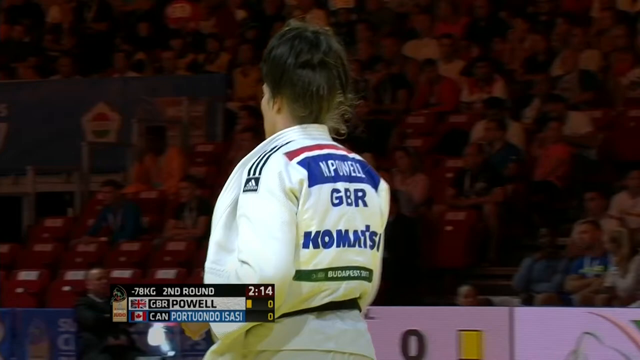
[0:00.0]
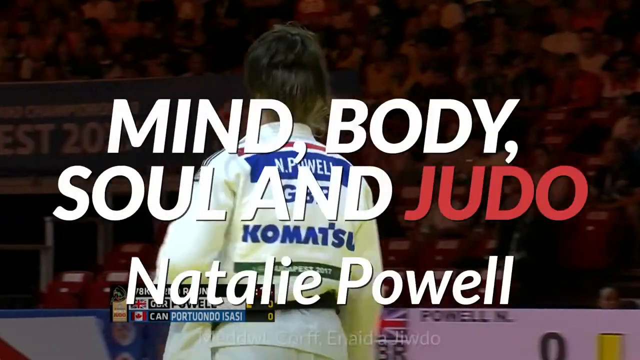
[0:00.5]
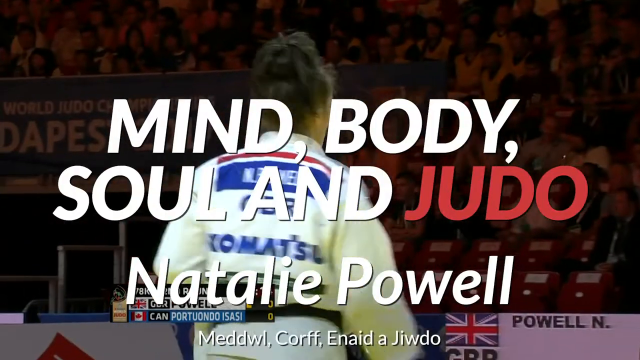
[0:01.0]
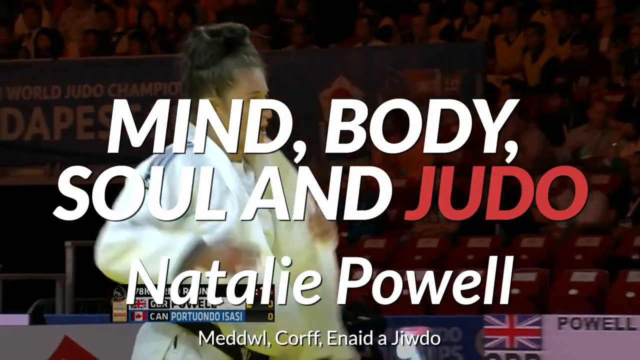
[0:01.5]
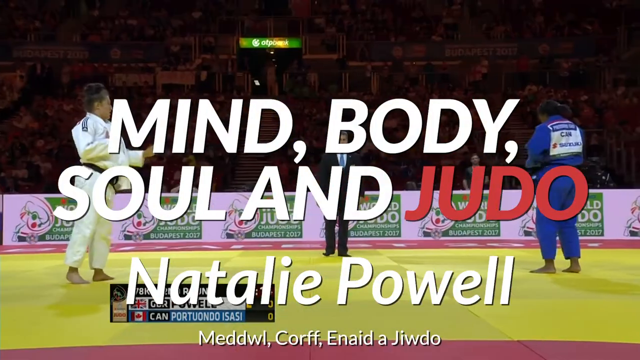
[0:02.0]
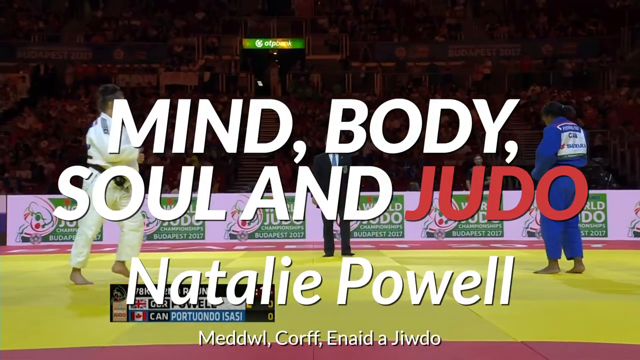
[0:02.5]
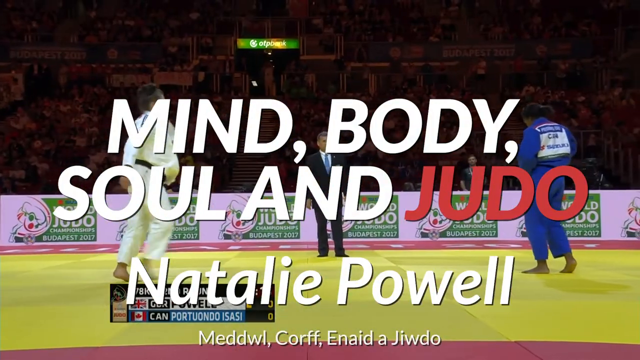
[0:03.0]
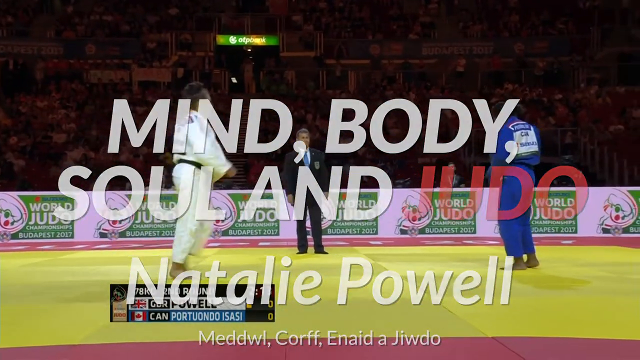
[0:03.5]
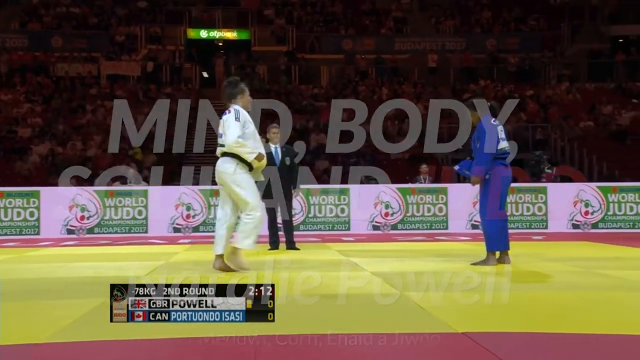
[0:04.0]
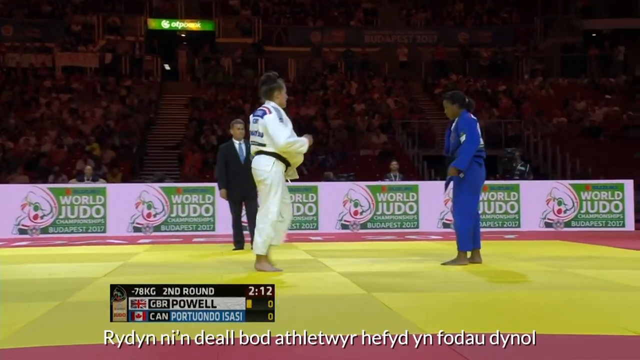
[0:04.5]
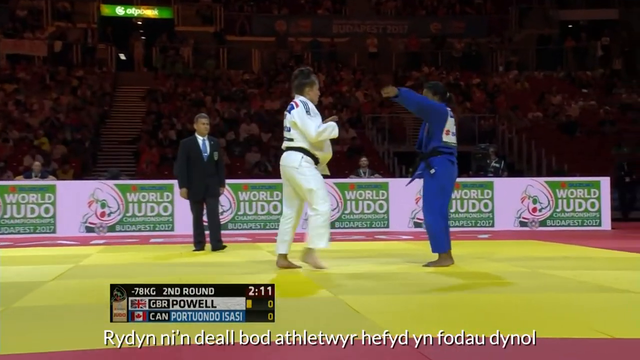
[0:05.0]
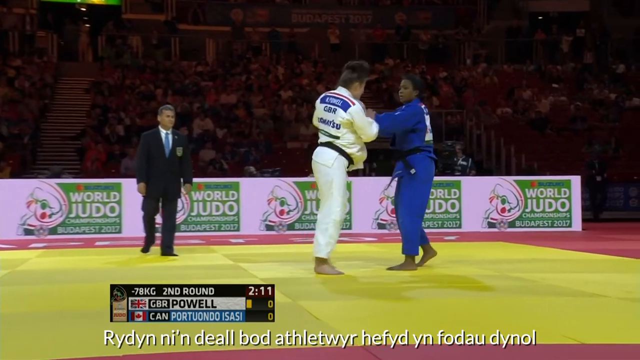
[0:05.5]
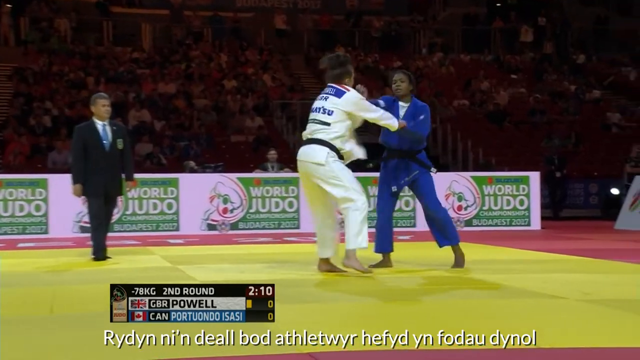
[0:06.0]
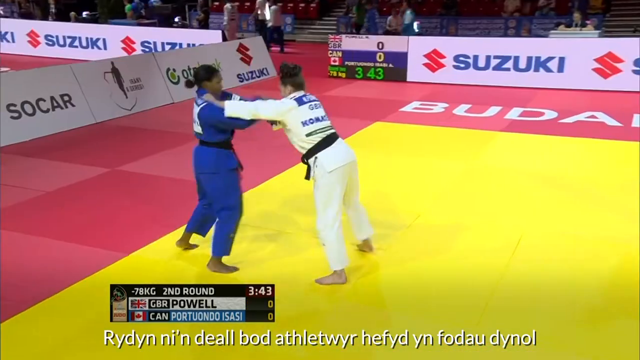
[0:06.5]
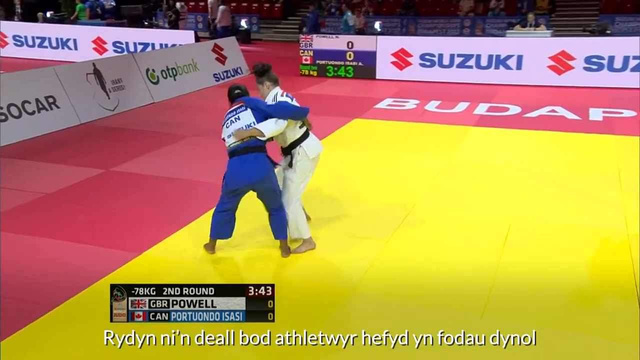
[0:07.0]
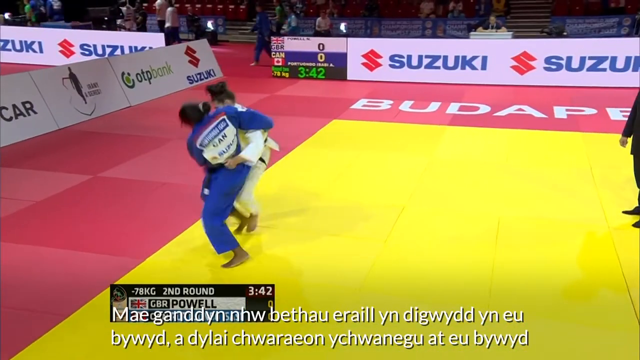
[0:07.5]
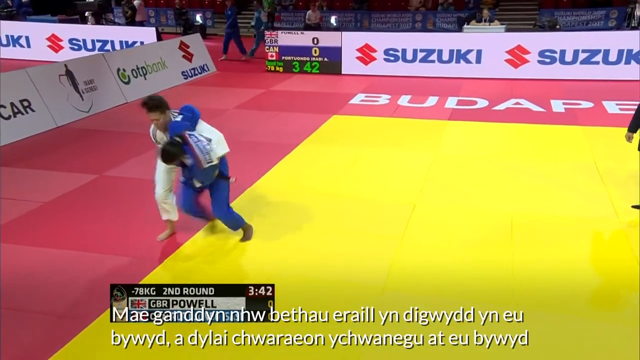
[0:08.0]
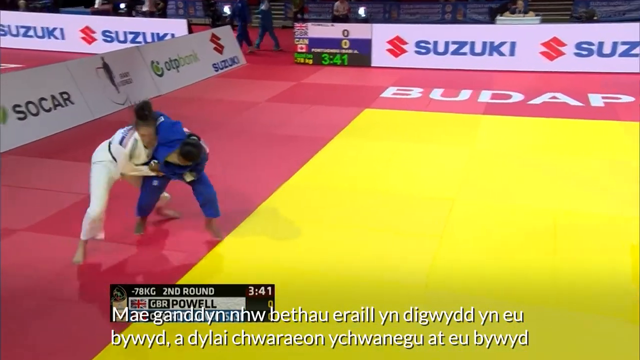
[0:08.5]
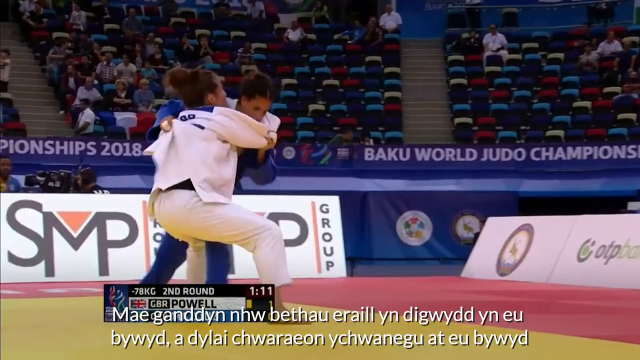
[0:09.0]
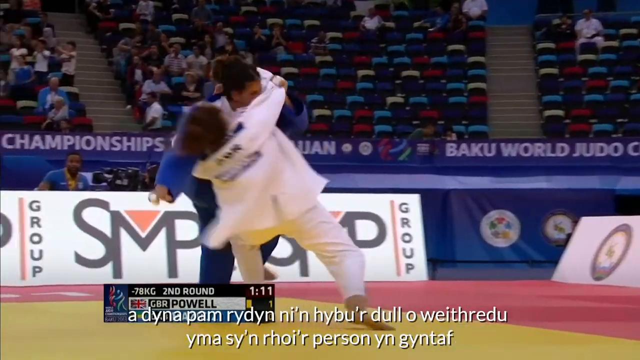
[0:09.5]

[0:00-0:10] Two judo players, one from Great Britain and the other from Canada, compete against each other in front of an audience, each trying to knock the opponent to the ground first to win the match. The background is very dark, so the people in the audience cannot really be seen.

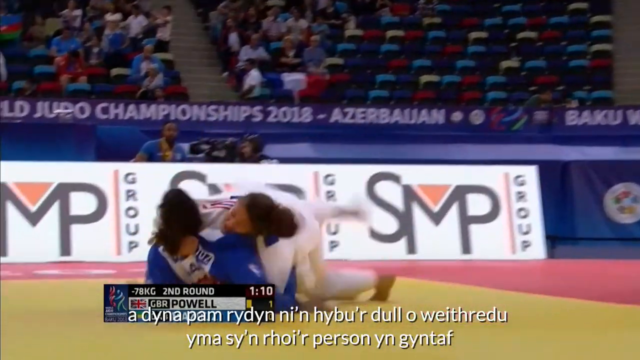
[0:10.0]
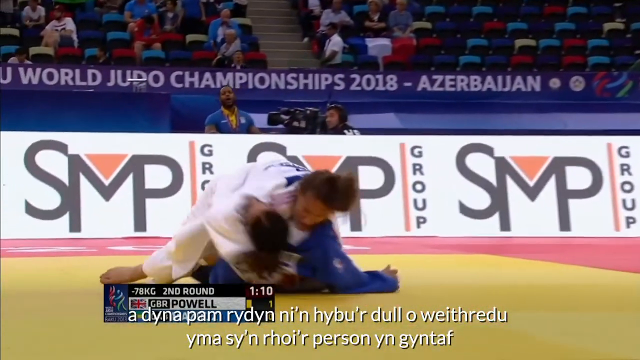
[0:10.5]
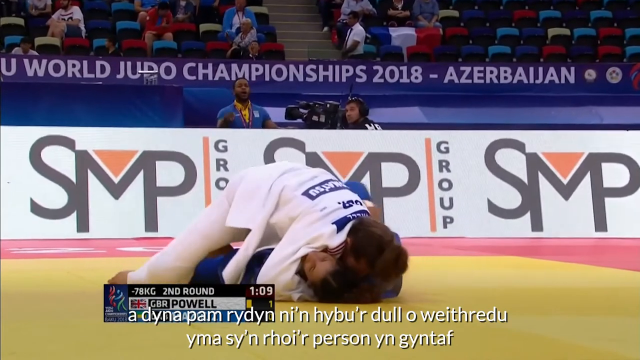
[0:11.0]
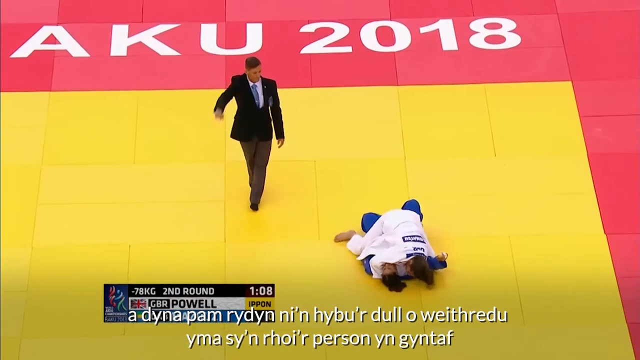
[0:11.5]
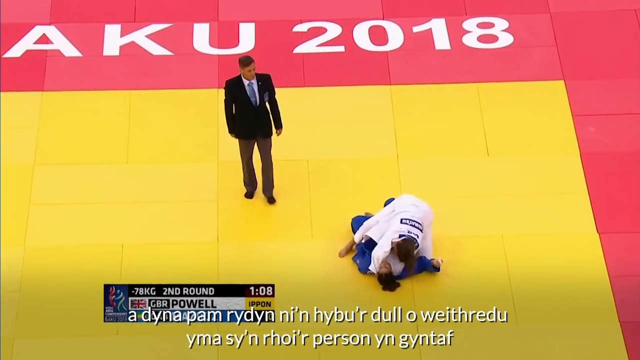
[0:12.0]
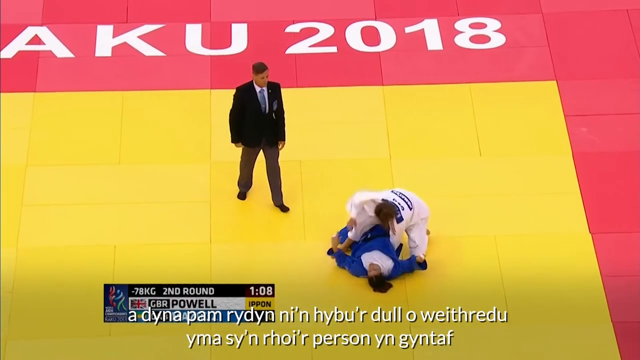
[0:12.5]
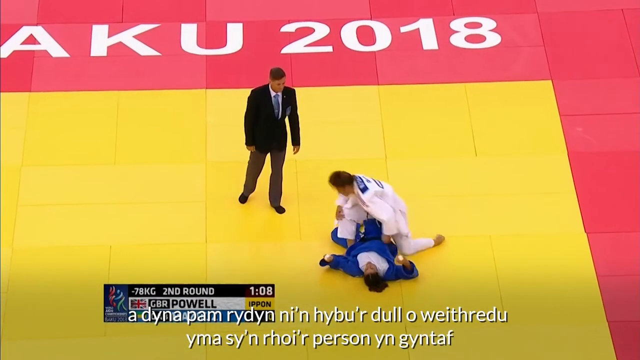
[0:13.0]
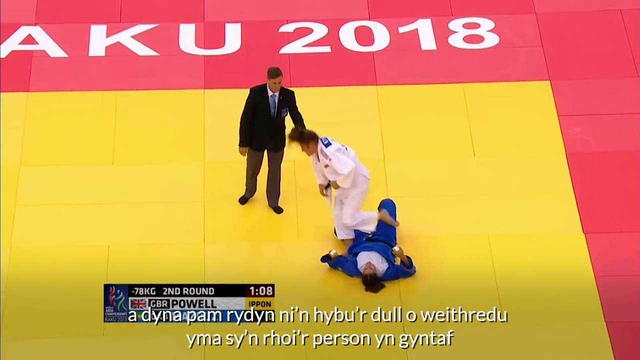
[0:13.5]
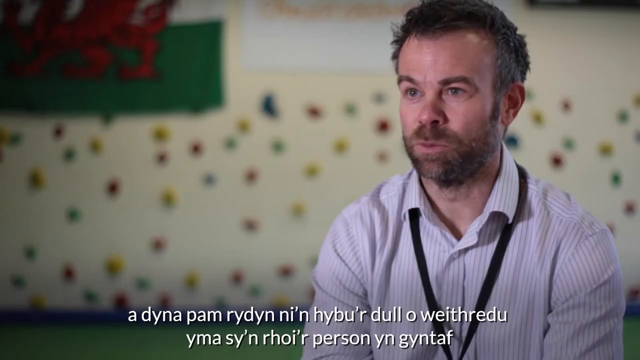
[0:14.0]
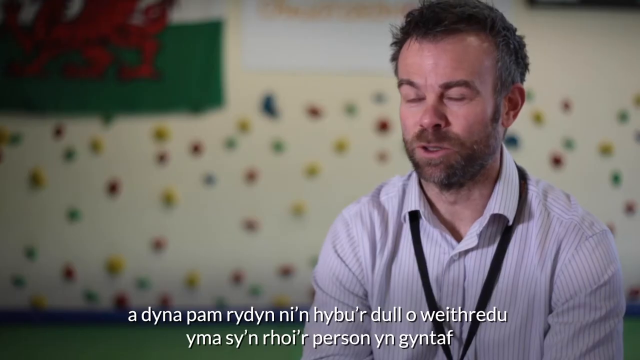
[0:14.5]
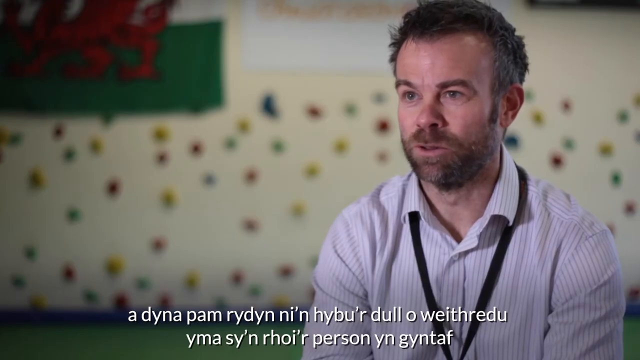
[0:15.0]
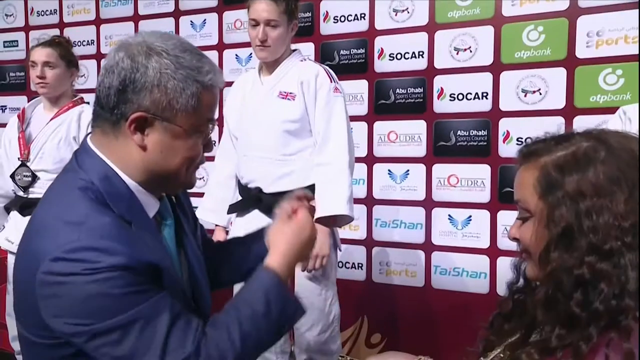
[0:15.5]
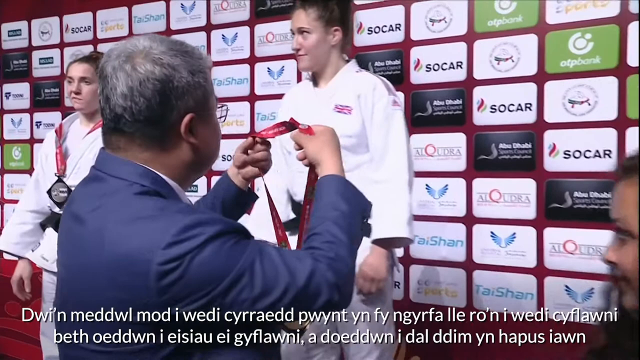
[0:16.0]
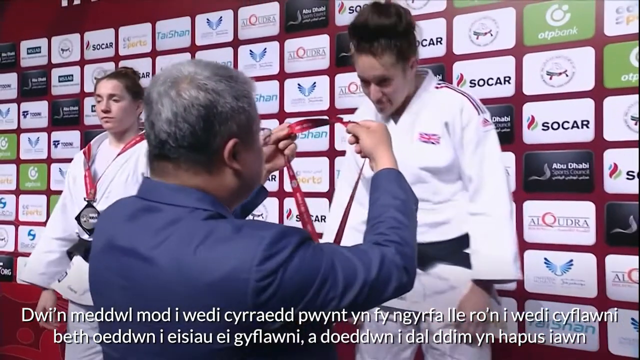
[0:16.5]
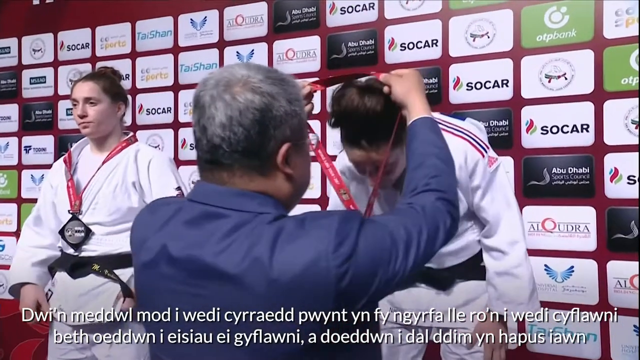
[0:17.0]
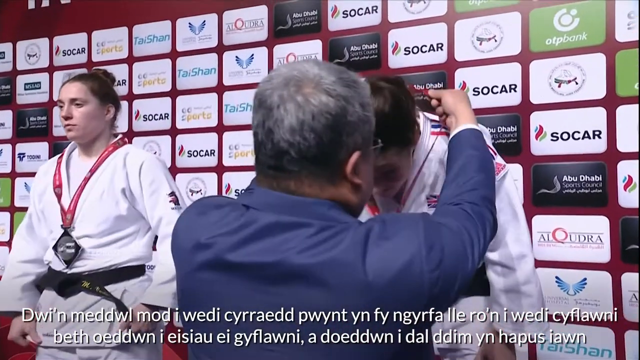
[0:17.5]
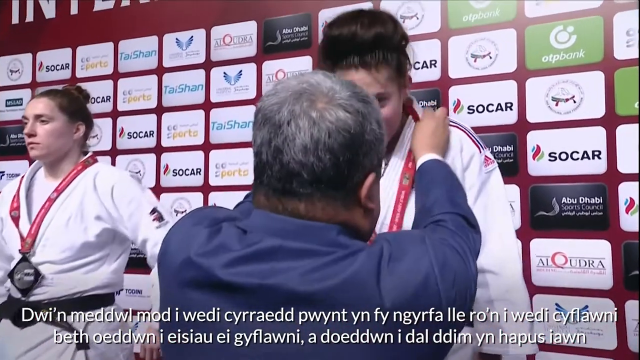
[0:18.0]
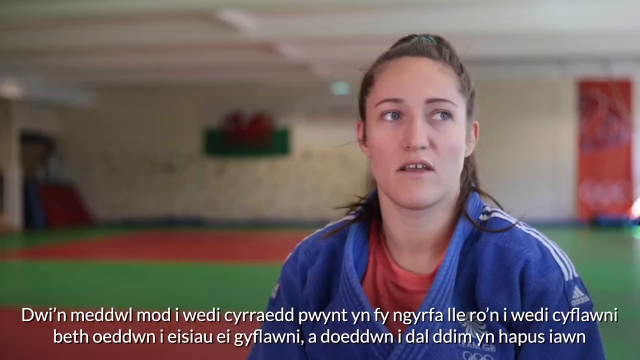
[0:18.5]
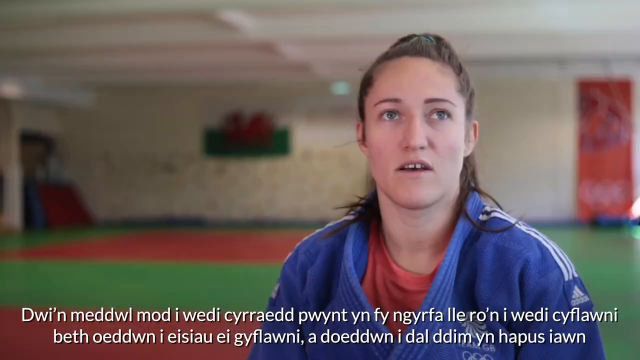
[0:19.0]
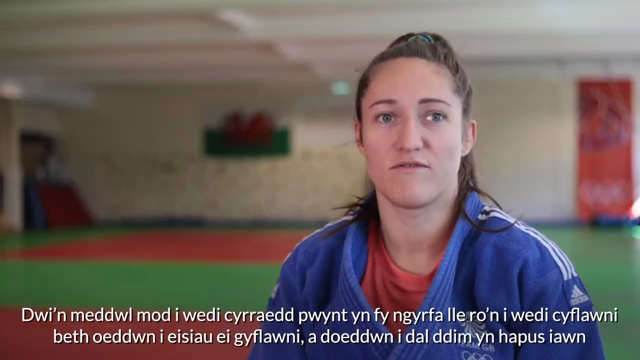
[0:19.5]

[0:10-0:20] Two judo players compete against each other. At the end, some players are given medals and stand on a podium.